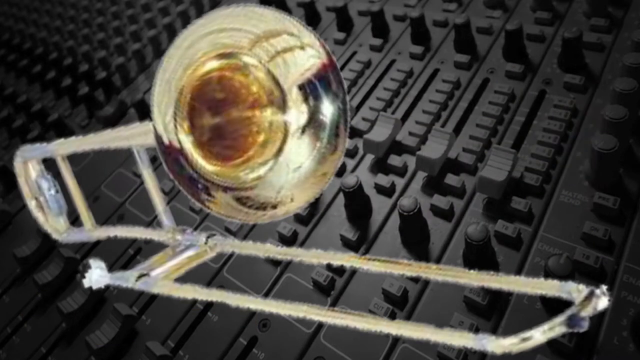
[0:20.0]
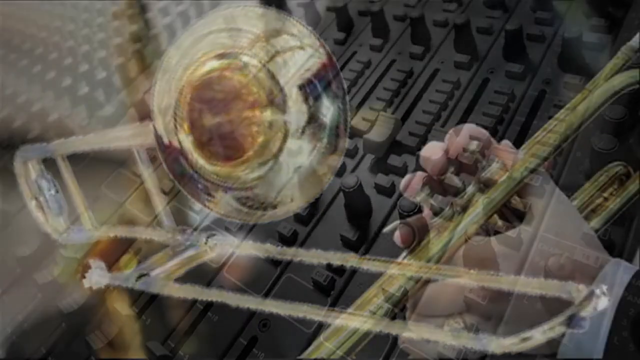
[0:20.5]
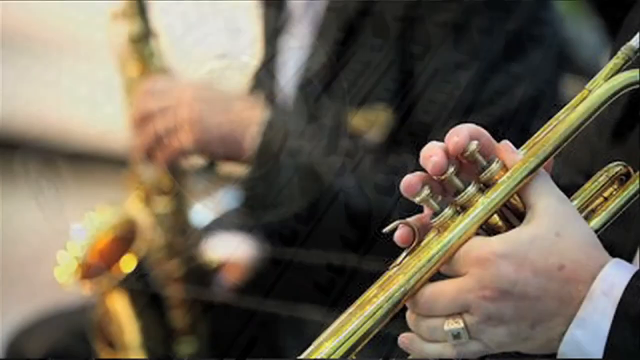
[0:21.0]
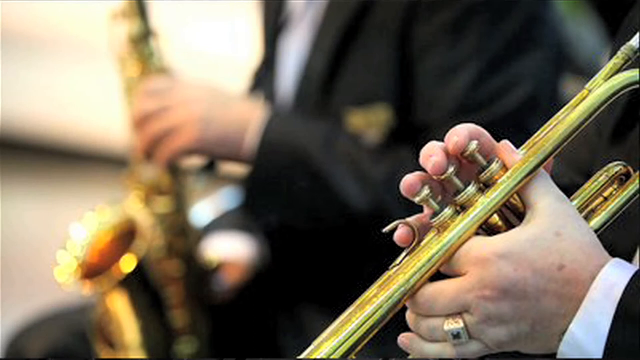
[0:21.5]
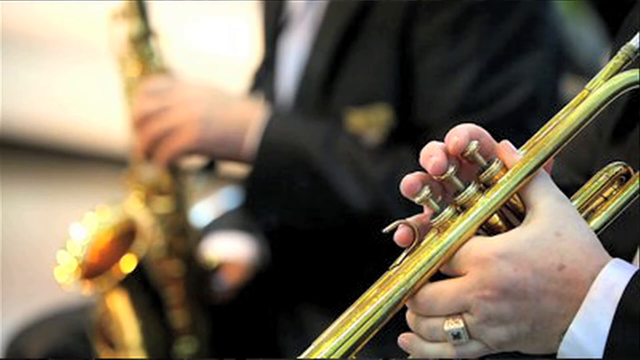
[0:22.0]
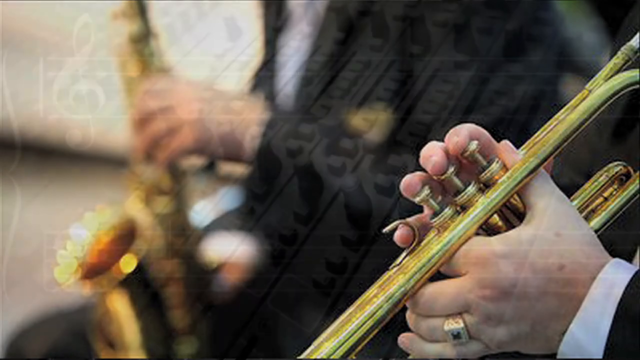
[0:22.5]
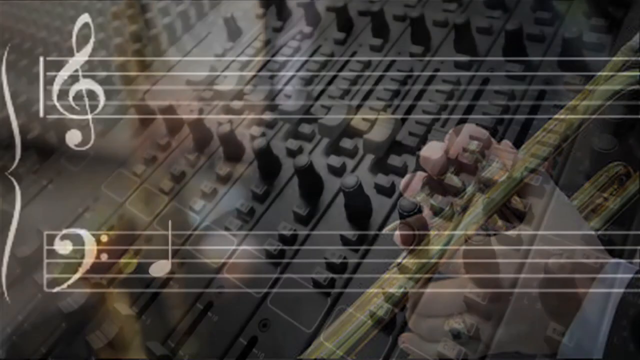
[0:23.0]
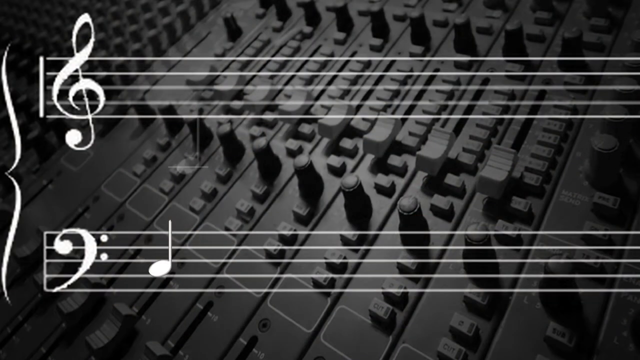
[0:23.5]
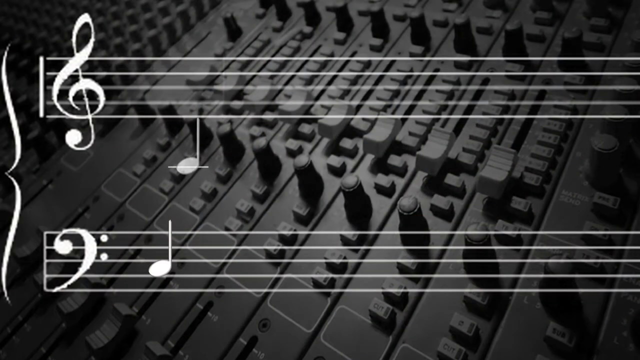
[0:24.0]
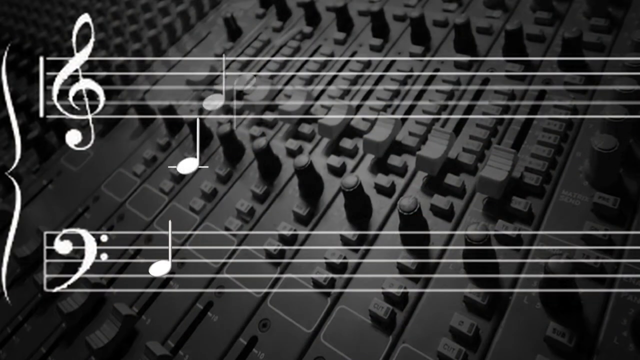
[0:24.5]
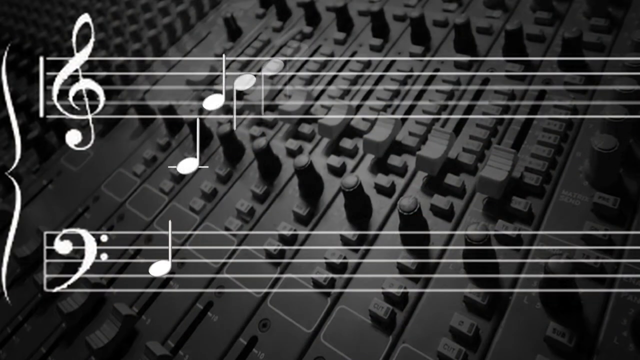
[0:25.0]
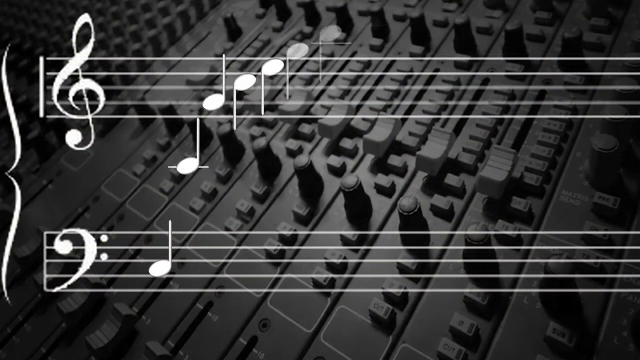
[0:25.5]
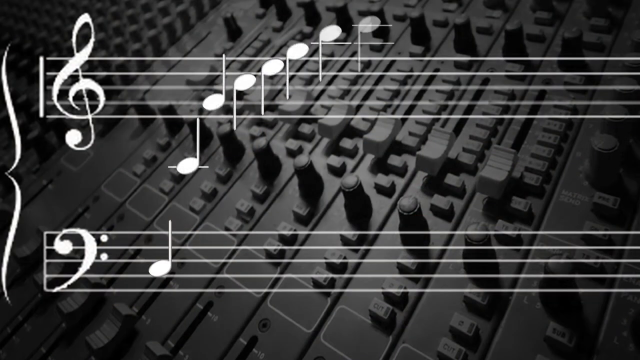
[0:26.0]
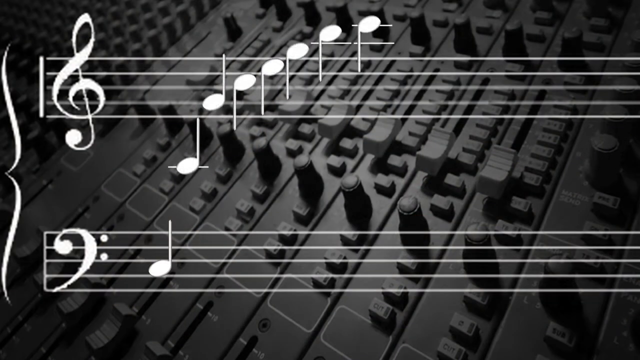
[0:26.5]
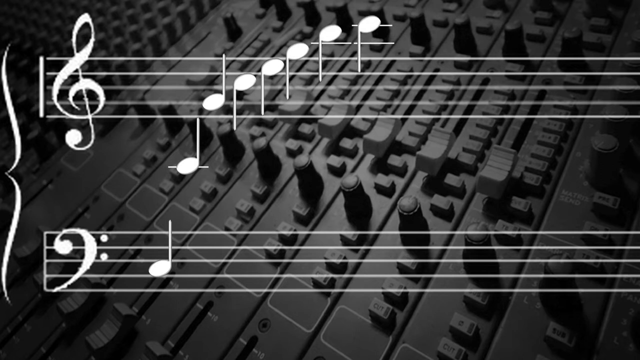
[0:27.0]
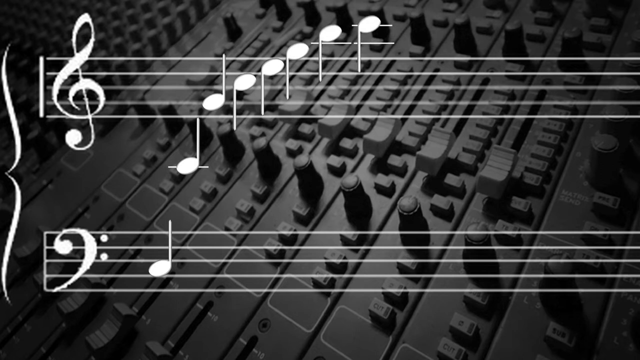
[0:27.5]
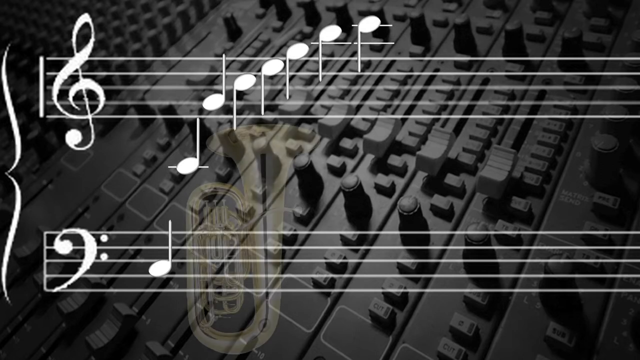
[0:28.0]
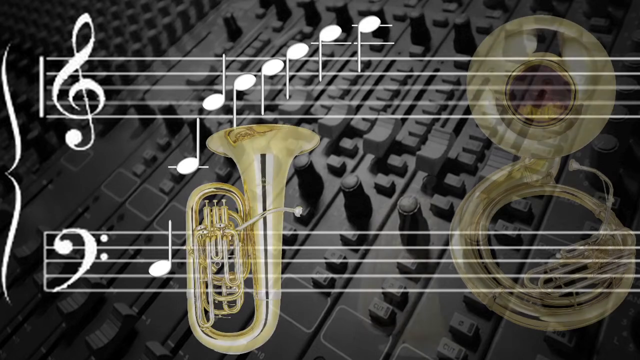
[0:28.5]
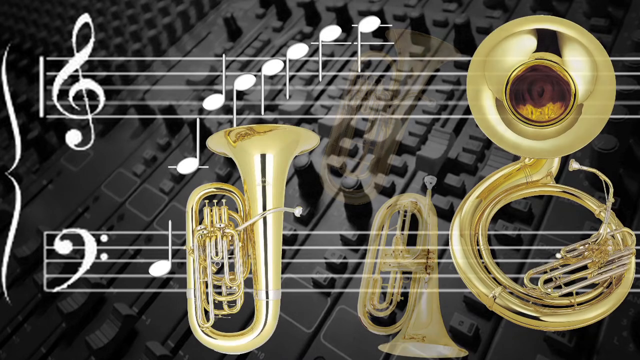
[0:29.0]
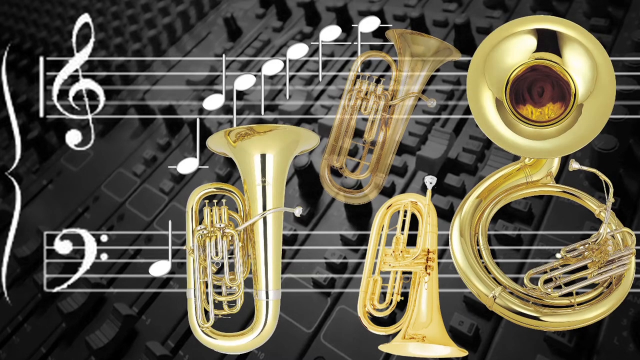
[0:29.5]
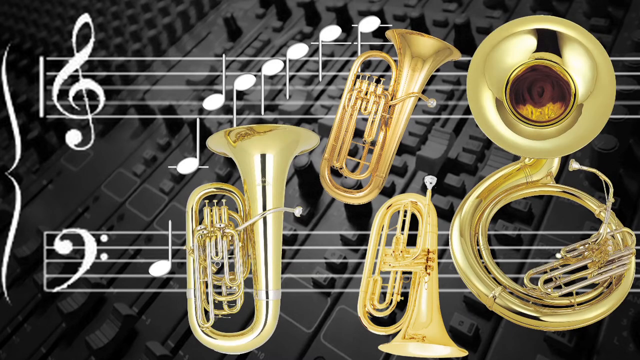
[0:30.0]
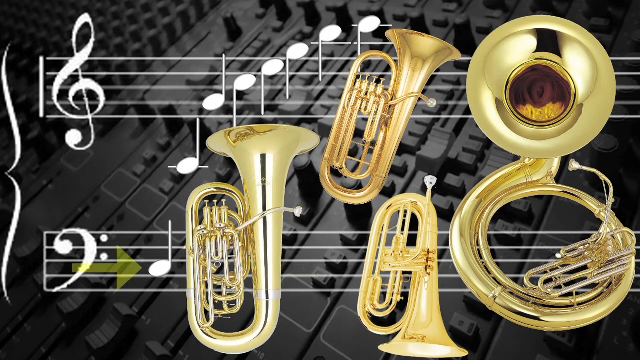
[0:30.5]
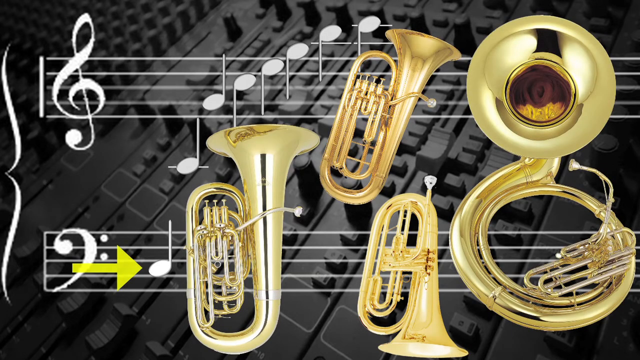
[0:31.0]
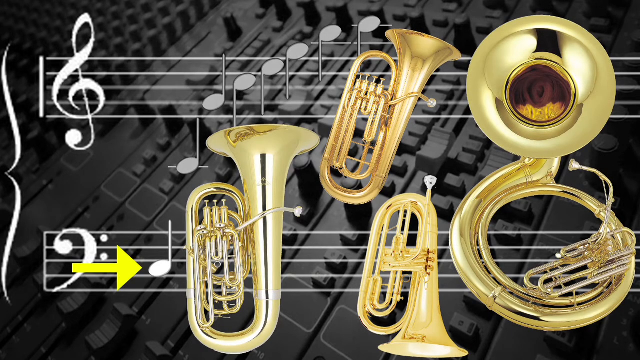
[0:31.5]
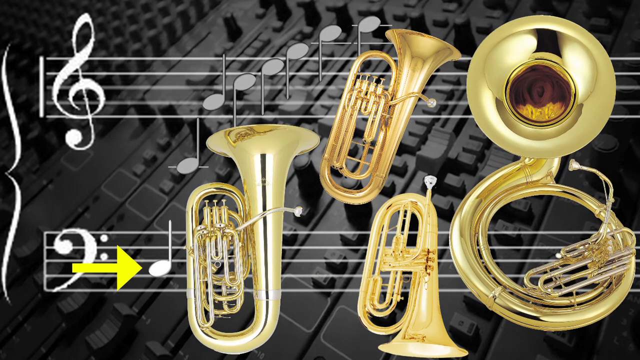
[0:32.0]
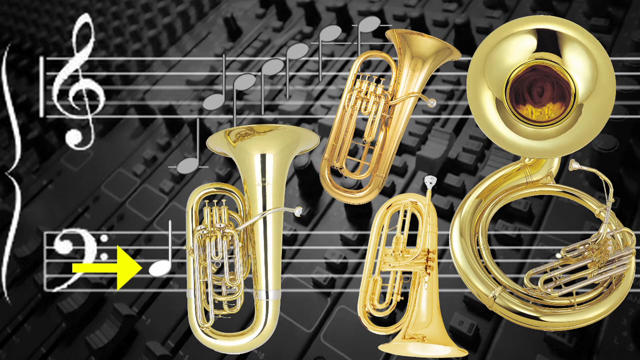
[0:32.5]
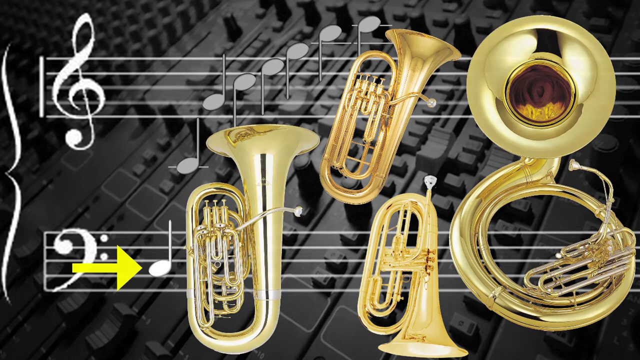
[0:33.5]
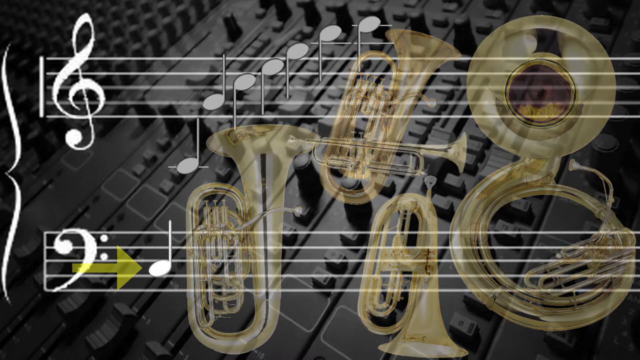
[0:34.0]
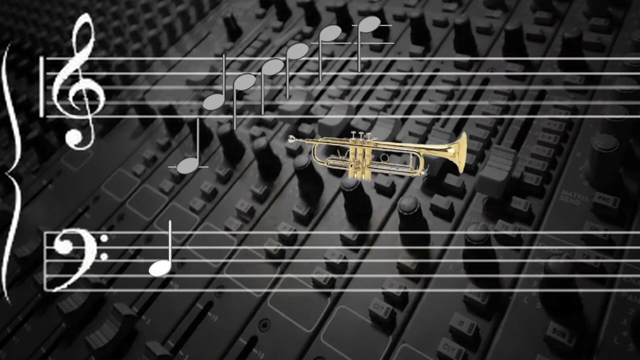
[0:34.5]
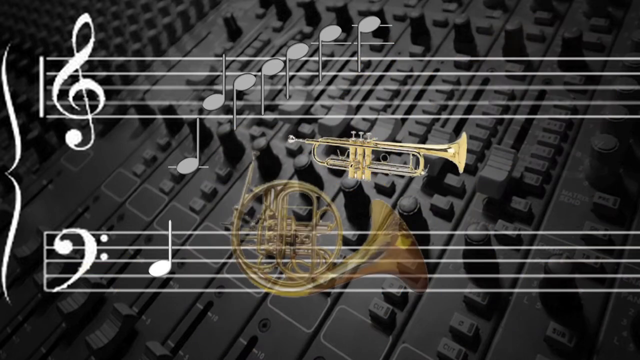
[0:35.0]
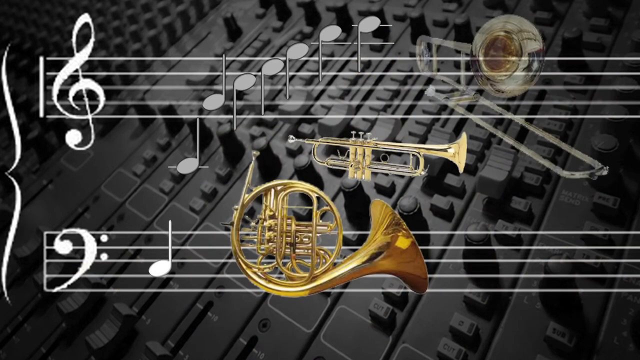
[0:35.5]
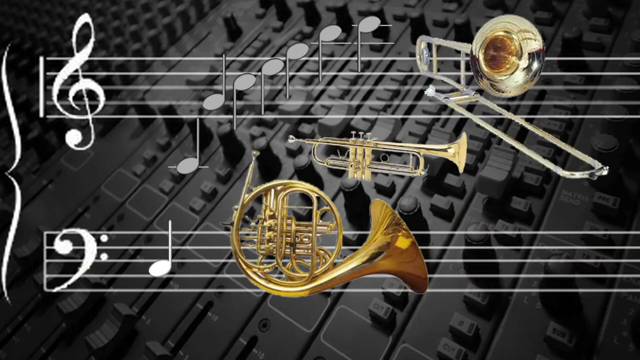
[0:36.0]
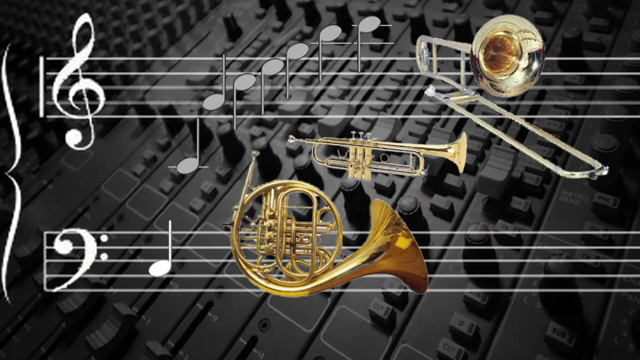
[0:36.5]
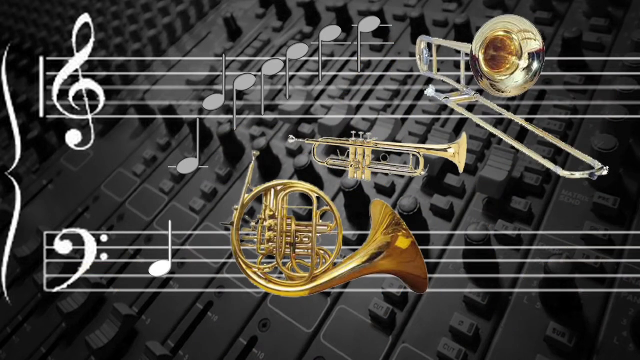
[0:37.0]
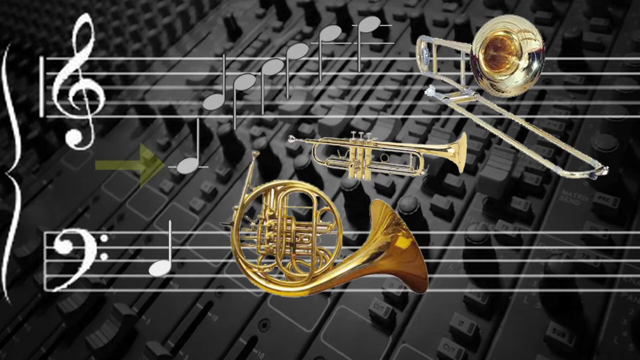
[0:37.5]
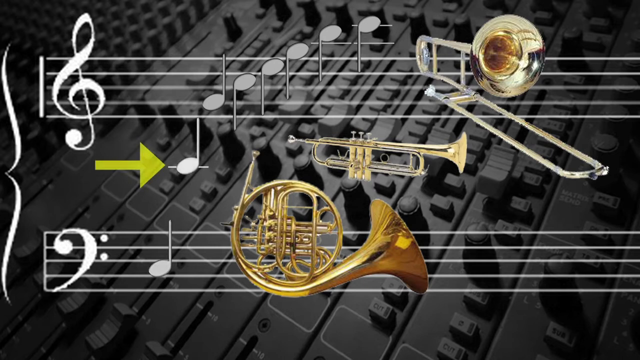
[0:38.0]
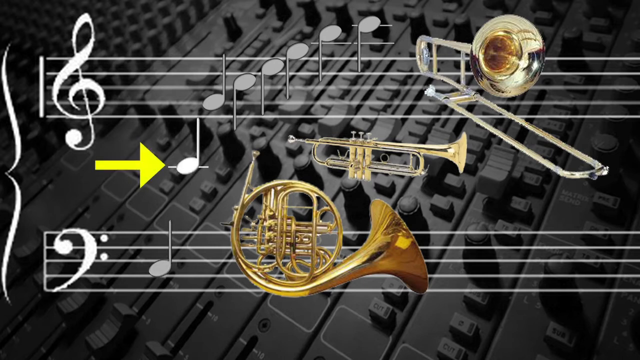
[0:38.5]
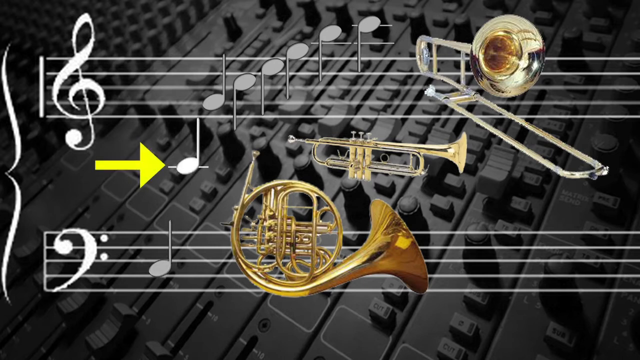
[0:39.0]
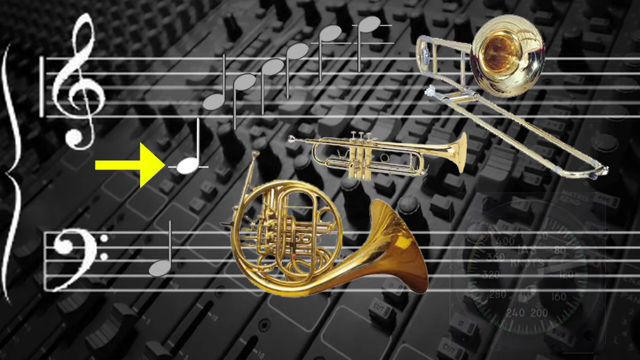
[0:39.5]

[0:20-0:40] What looks like stock footage shows someone playing a saxophone and a trumpet. Only the trumpet player's hands are visible: a man grips the trumpet in the lower right-hand corner of the frame. In the background someone plays a saxophone, out of focus and less sharp than the trumpet player. Then two musical bars appear, and musical notes start to form along the bottom and the top, with only one note on the bottom and multiple notes along the top. Next comes a picture of a tuba, a French horn, what looks like a marching-band tuba with a big circle in the center, and another tuba along the top. Then a French horn, a trumpet in the center, and a trombone in the top right-hand corner are shown.